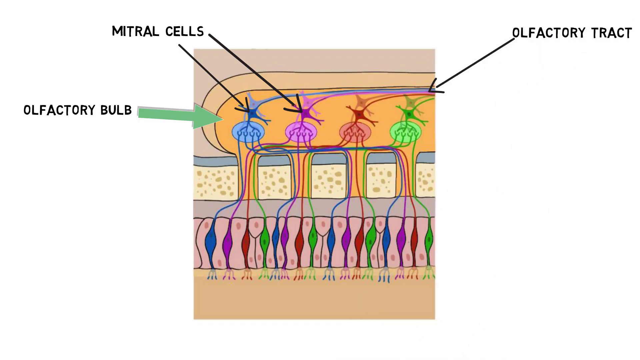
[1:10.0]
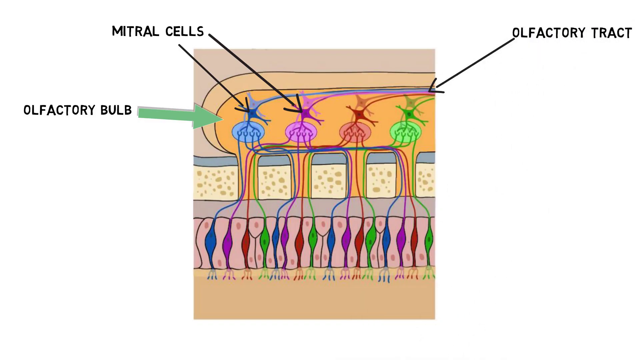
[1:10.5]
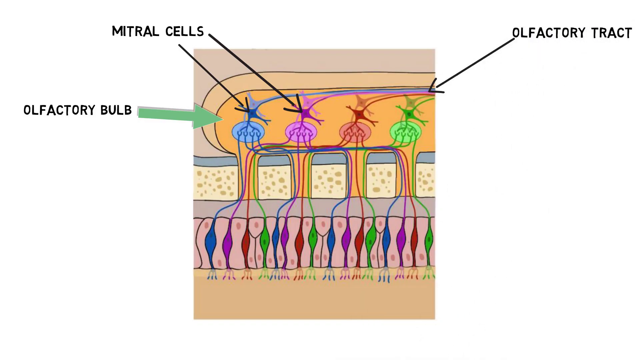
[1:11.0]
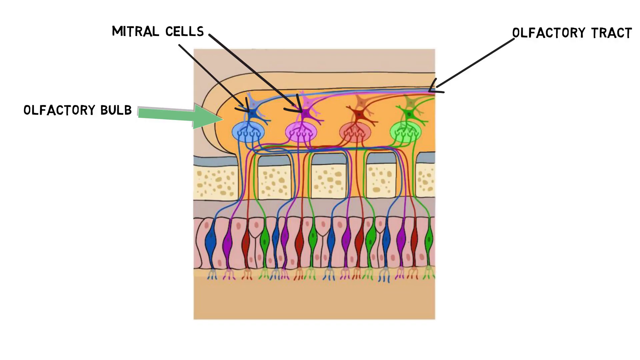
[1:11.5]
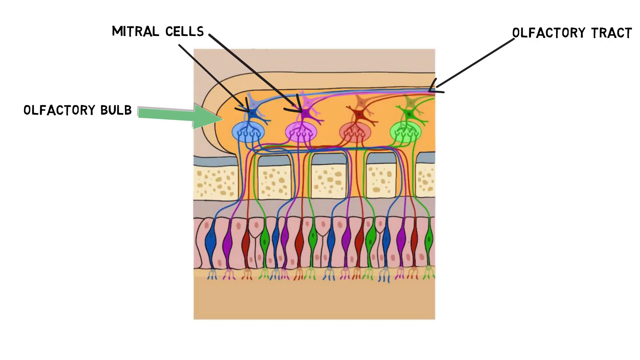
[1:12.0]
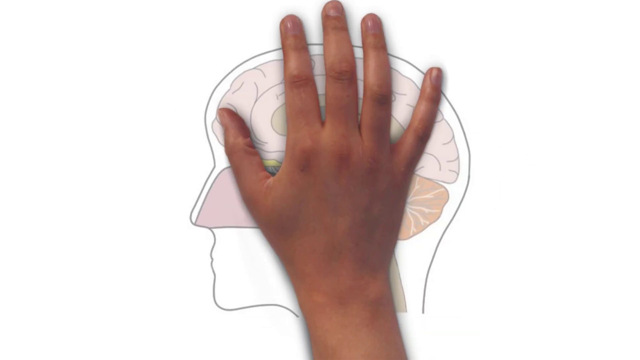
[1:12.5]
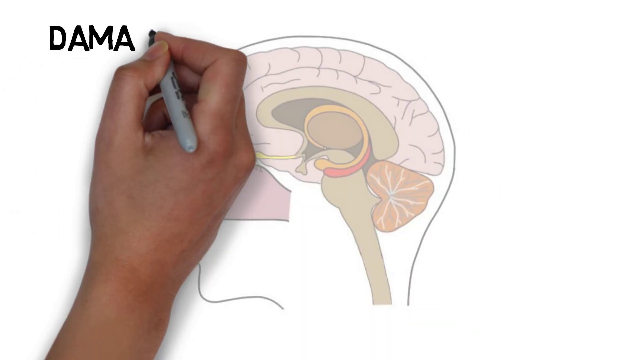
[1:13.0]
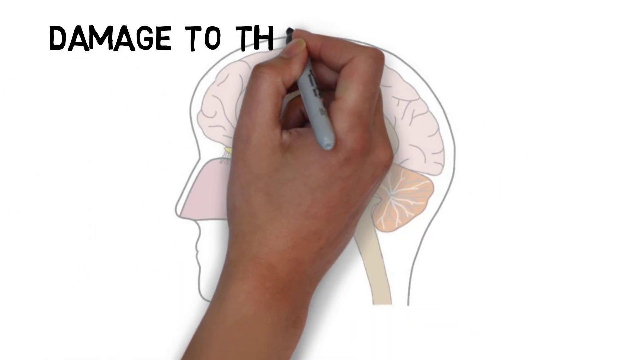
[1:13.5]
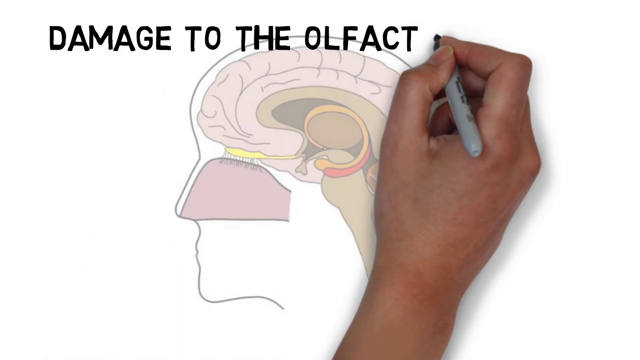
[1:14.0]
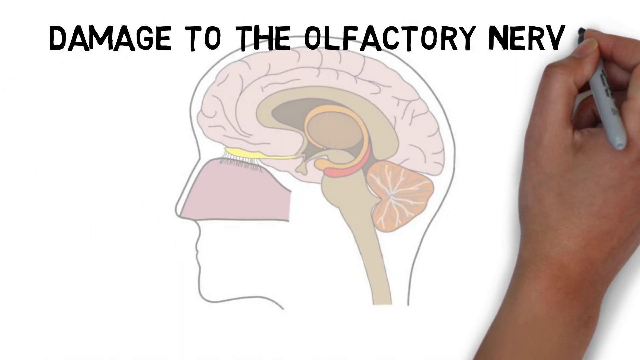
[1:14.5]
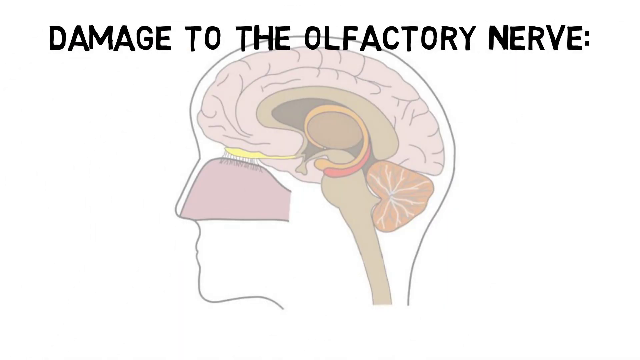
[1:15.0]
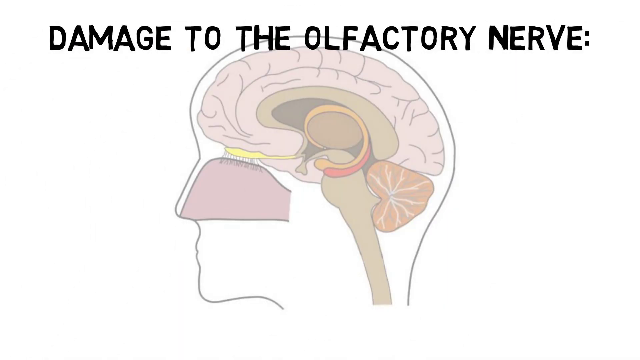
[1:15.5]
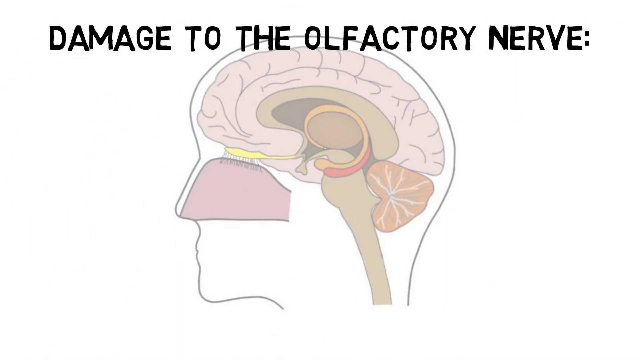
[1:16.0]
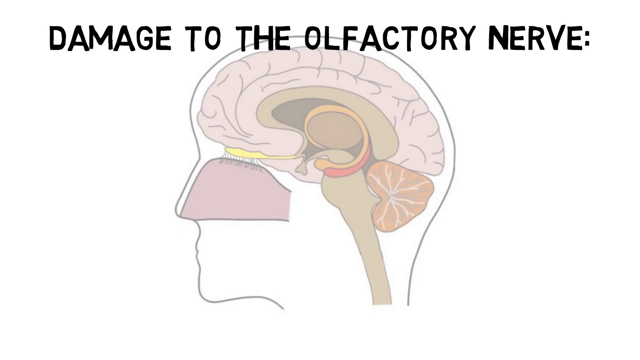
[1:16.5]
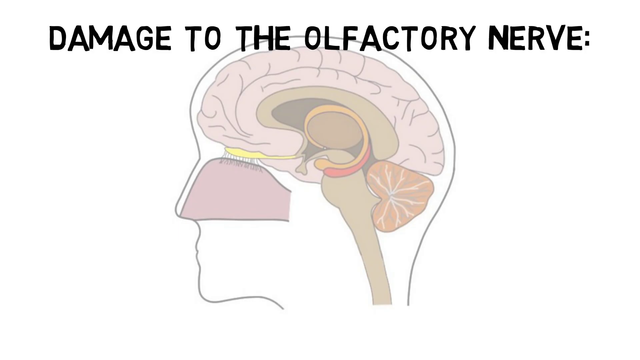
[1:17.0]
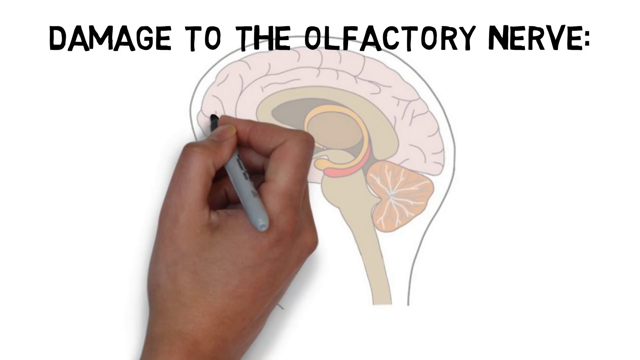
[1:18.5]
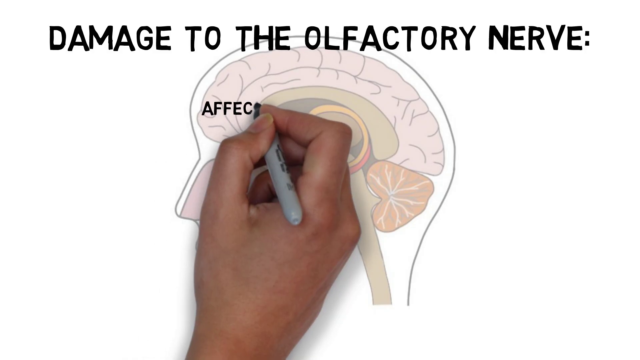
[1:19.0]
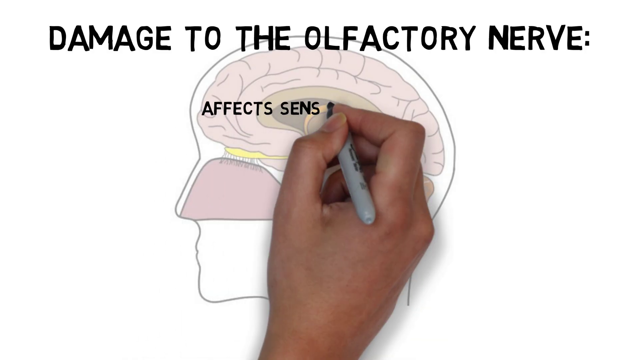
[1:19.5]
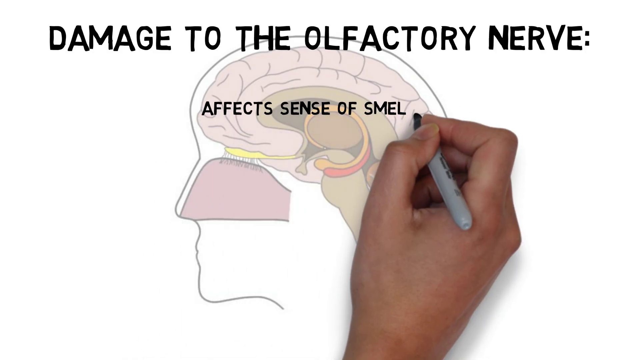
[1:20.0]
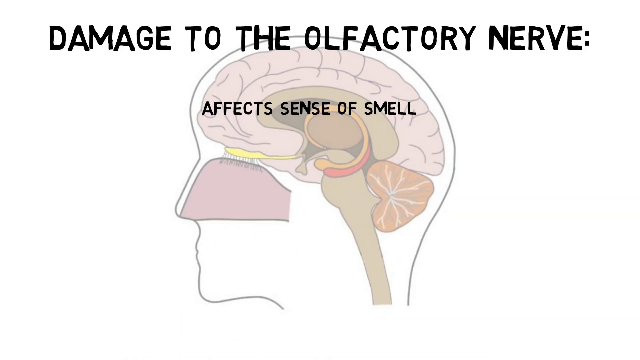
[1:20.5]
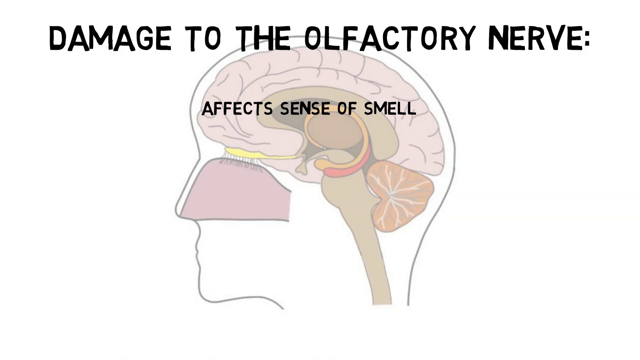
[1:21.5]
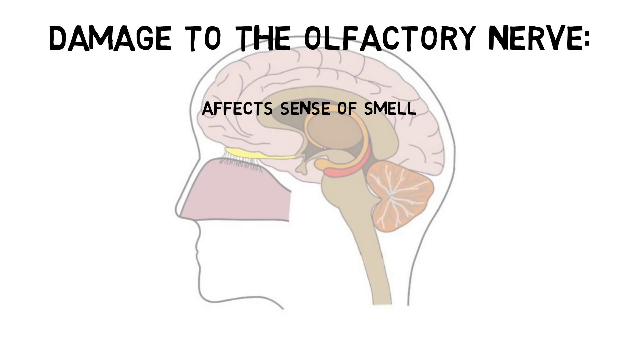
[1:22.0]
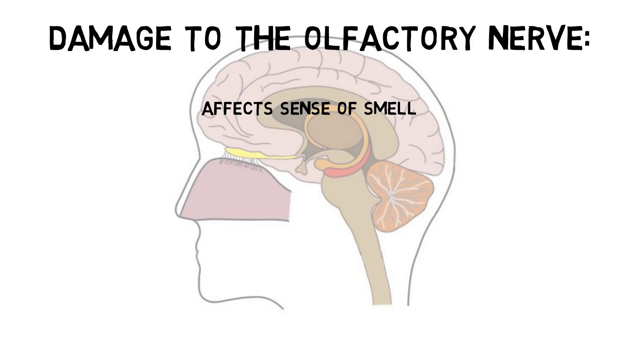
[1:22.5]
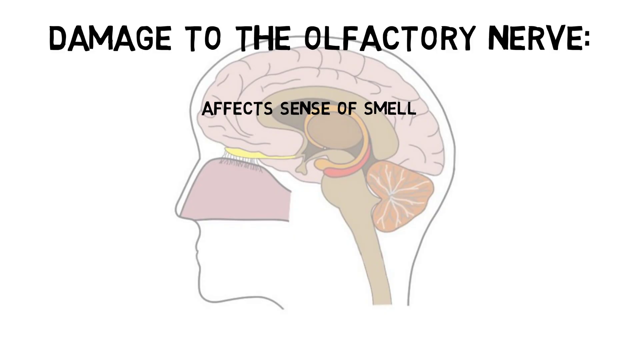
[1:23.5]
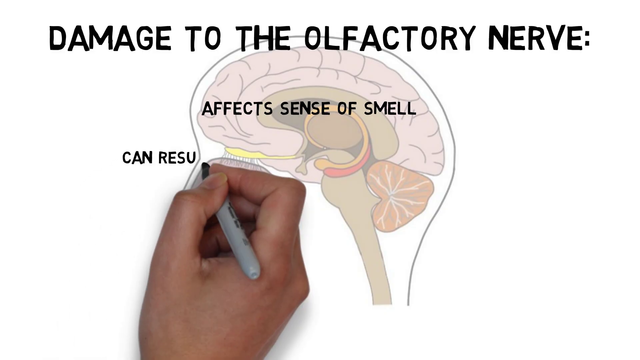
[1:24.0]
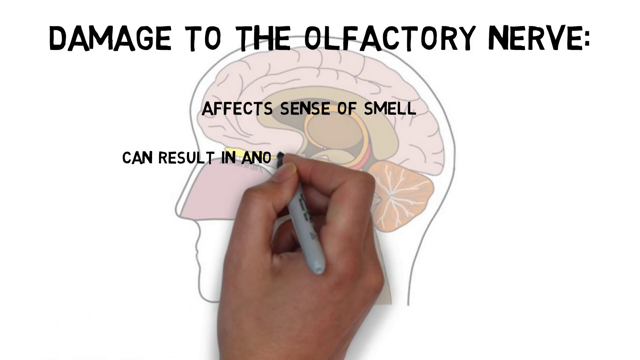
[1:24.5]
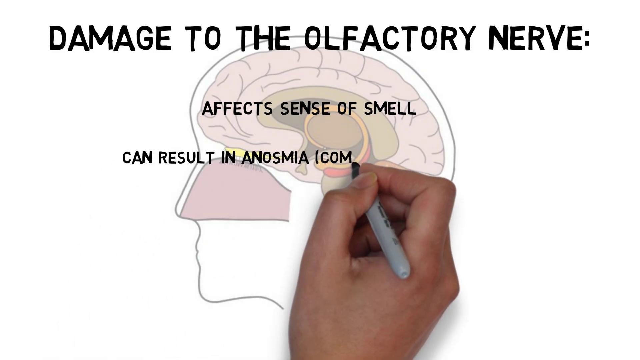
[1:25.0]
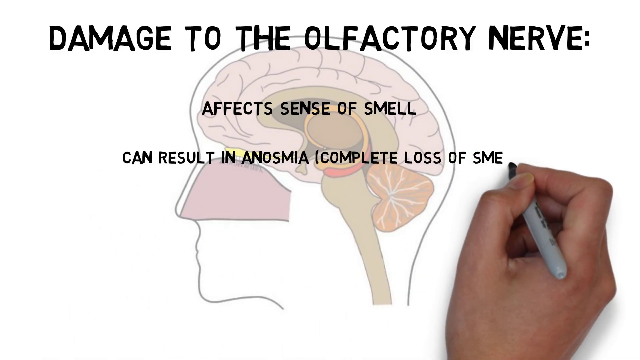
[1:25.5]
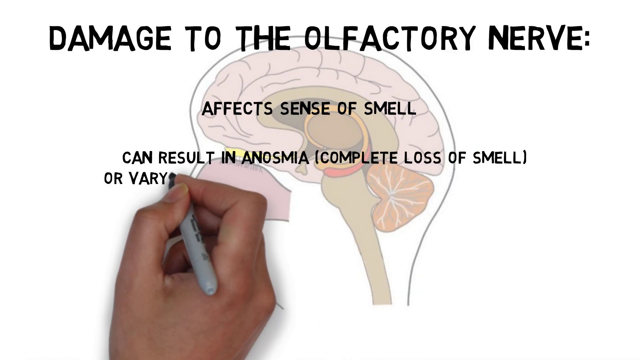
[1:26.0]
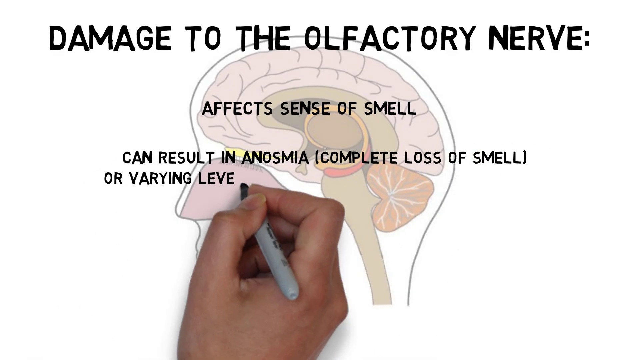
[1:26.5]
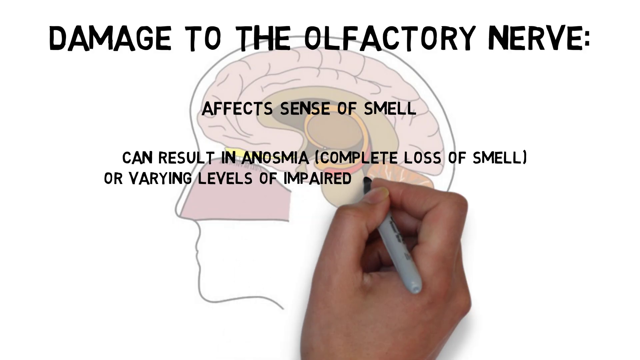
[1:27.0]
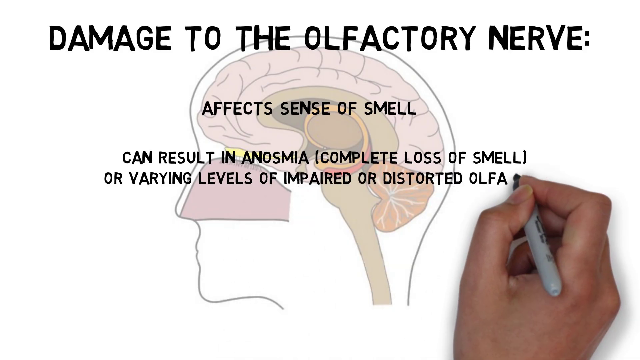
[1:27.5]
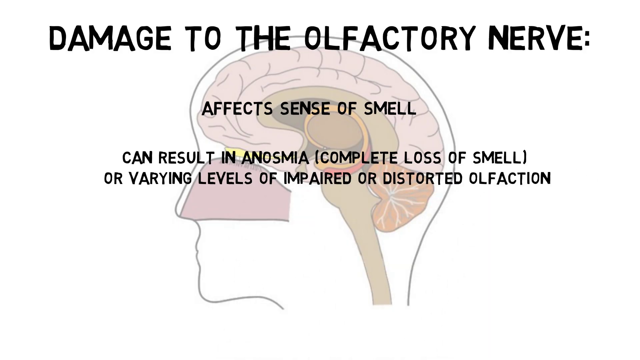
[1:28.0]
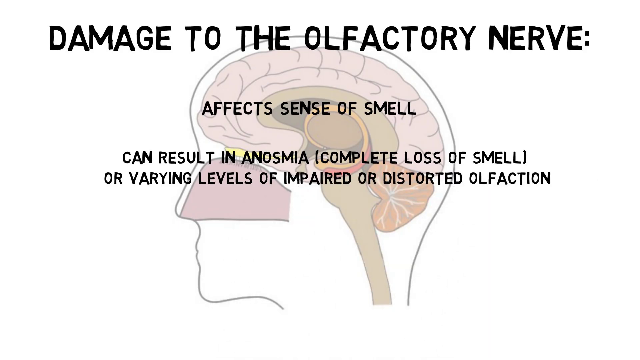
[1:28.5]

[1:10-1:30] The video moves on to damage to the olfactory nerve, presenting that such damage affects the sense of smell and can result in a complete loss of smell or varying levels of impaired or distorted smell.